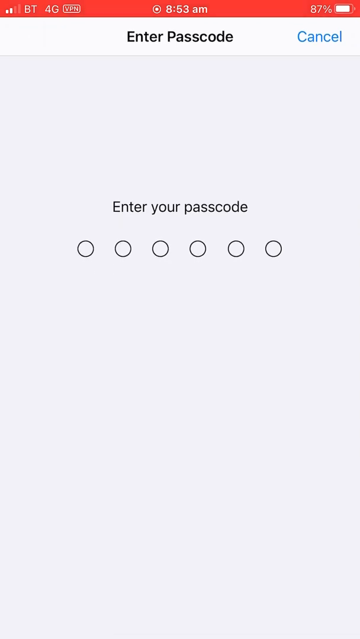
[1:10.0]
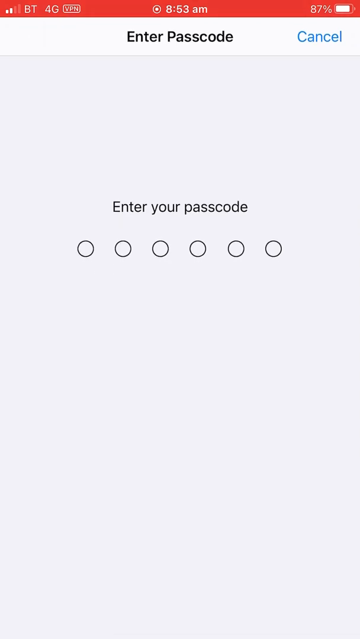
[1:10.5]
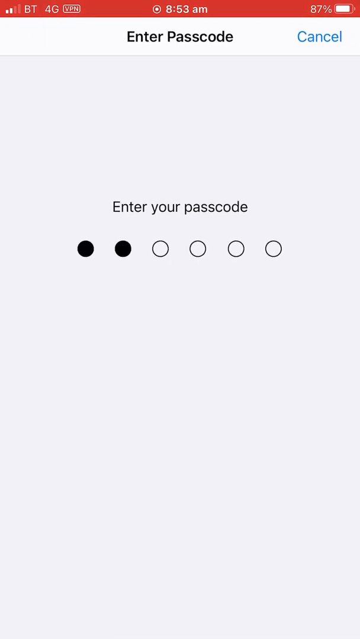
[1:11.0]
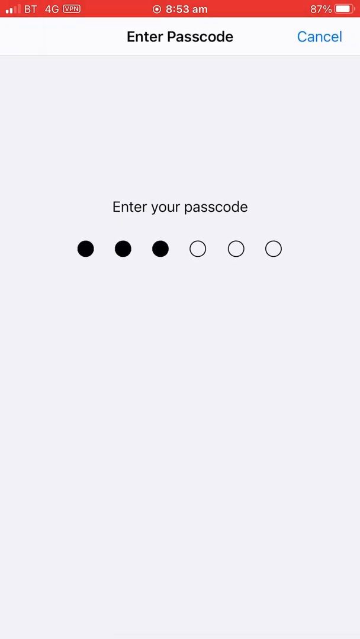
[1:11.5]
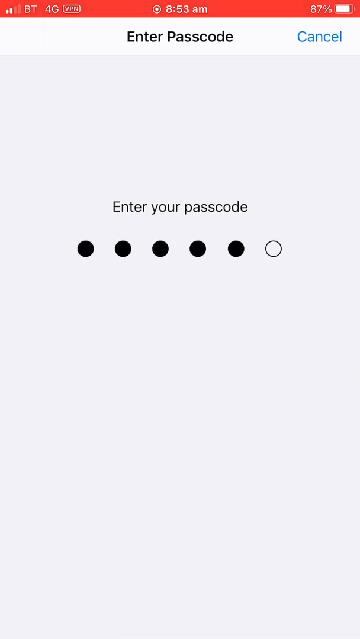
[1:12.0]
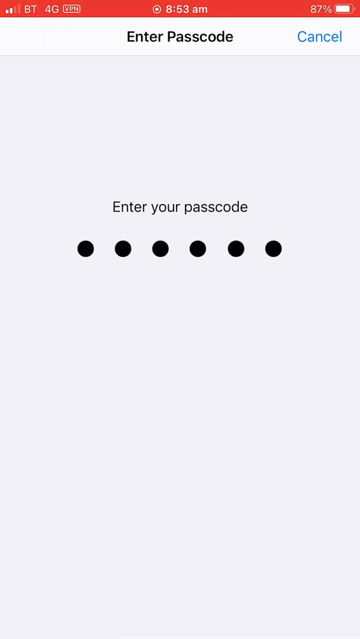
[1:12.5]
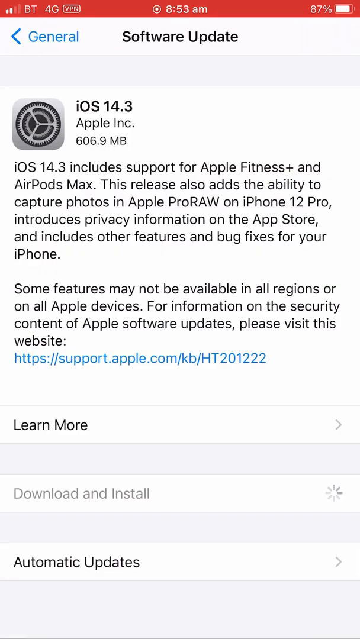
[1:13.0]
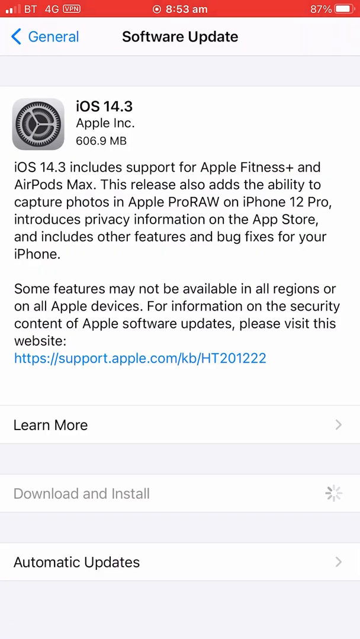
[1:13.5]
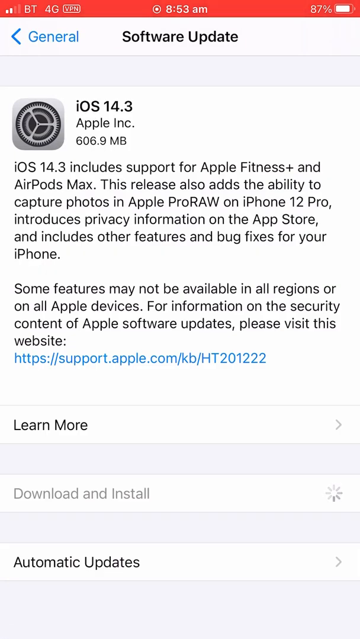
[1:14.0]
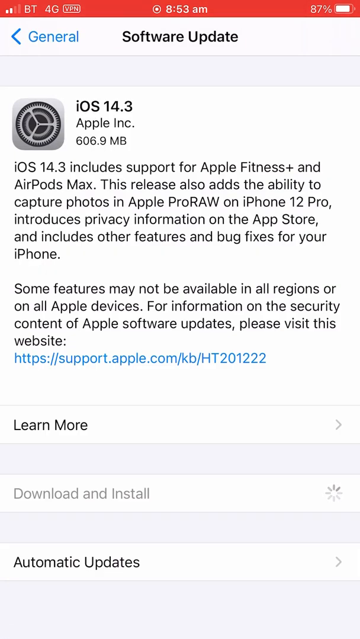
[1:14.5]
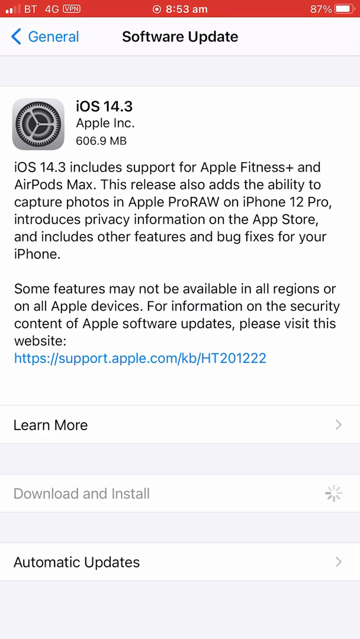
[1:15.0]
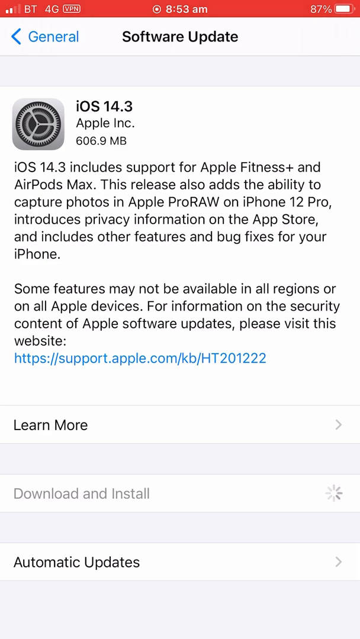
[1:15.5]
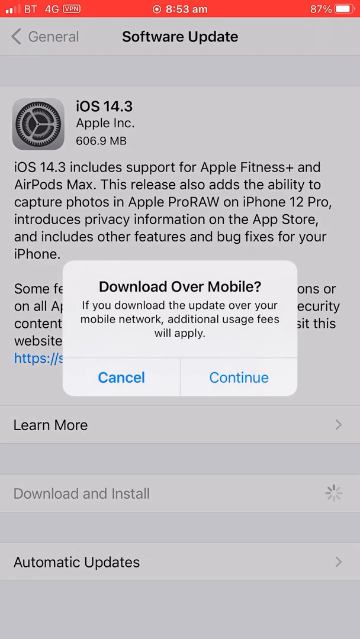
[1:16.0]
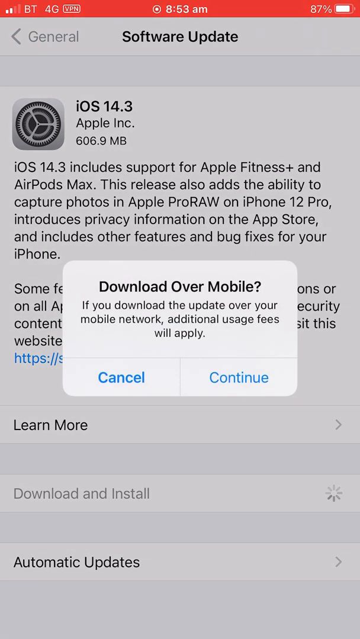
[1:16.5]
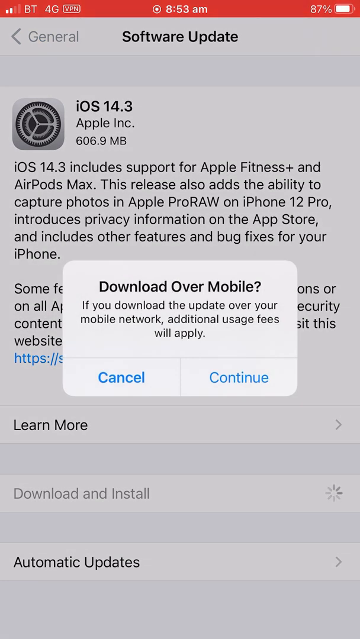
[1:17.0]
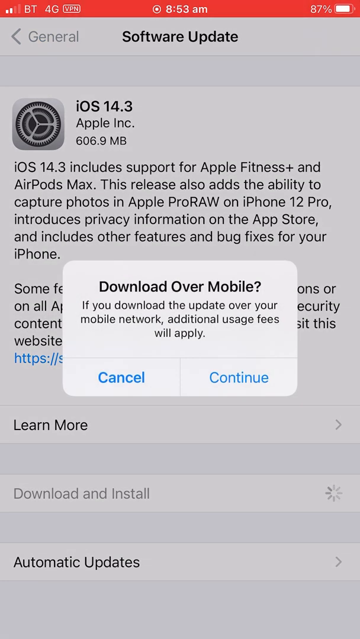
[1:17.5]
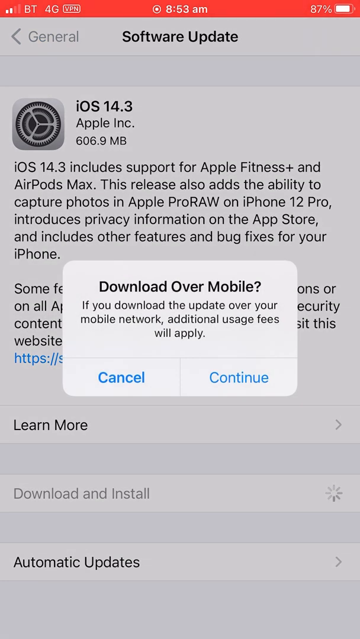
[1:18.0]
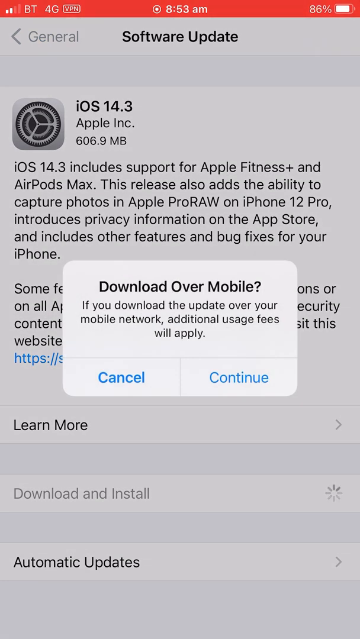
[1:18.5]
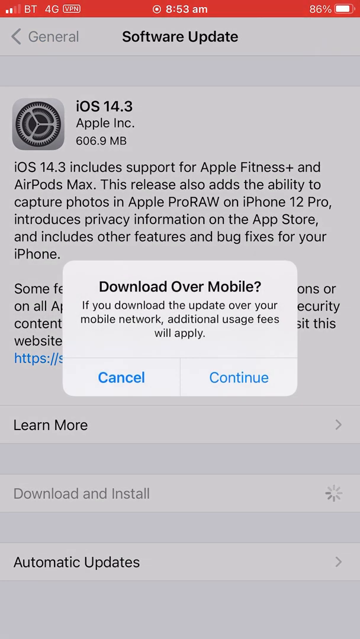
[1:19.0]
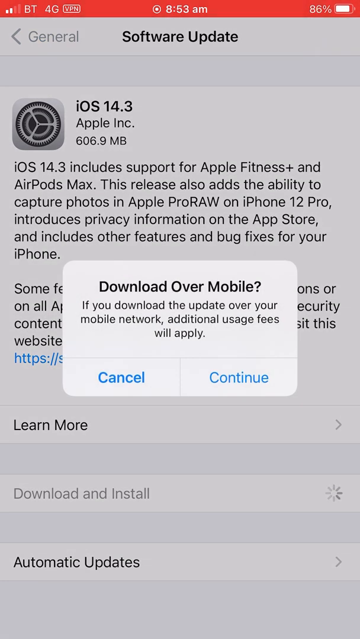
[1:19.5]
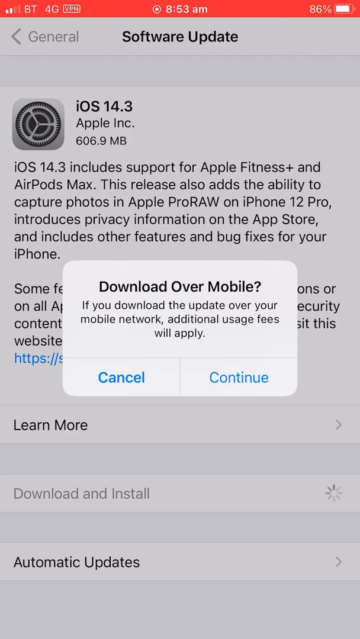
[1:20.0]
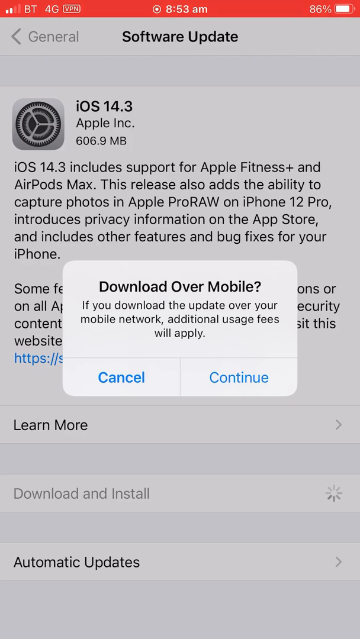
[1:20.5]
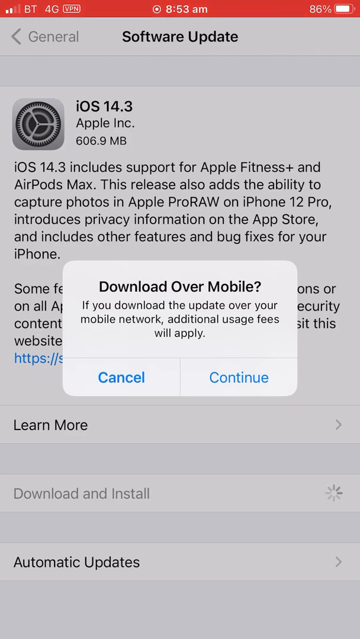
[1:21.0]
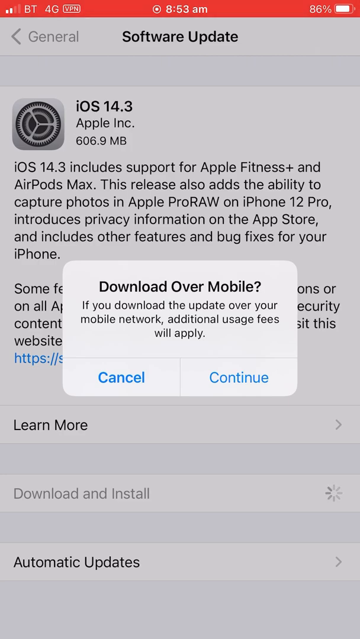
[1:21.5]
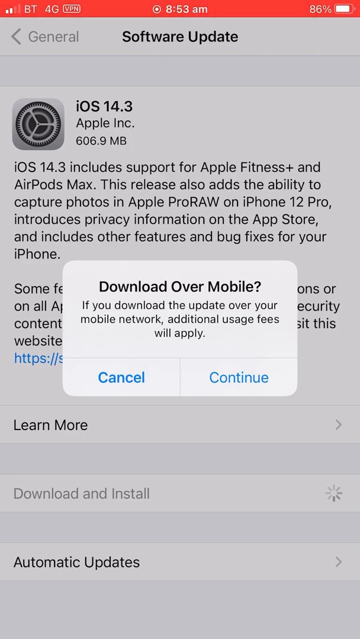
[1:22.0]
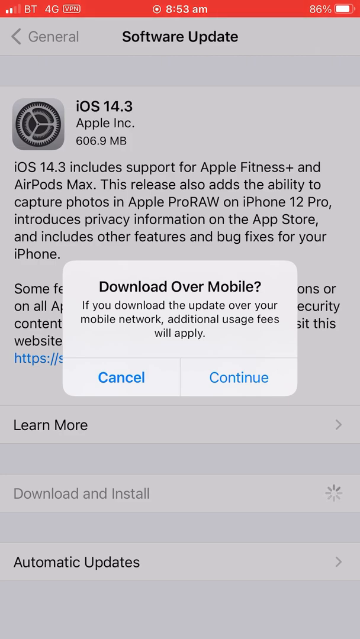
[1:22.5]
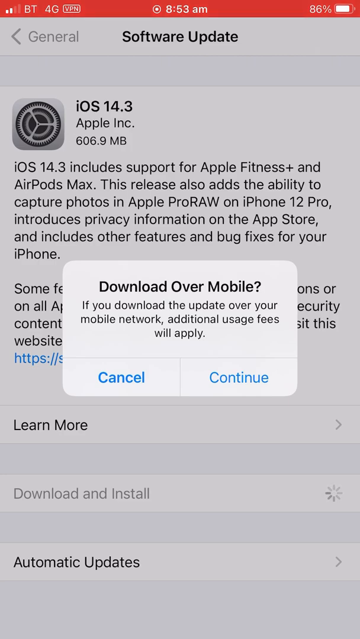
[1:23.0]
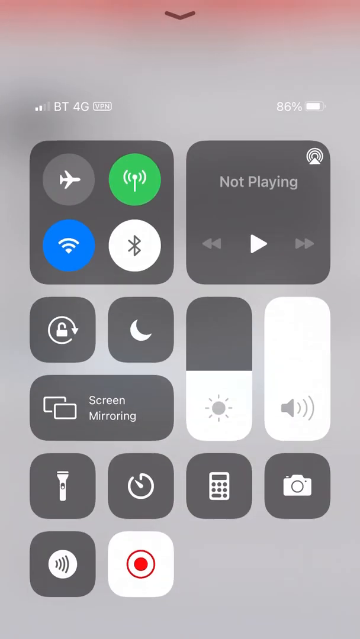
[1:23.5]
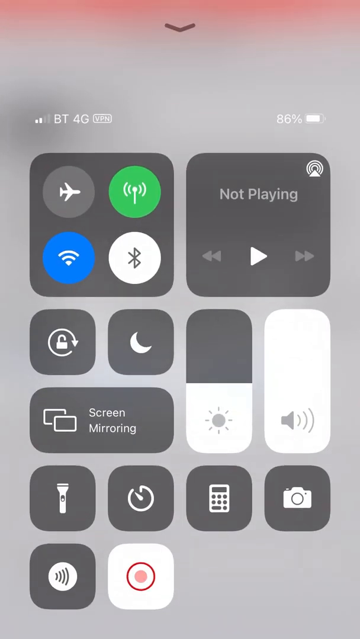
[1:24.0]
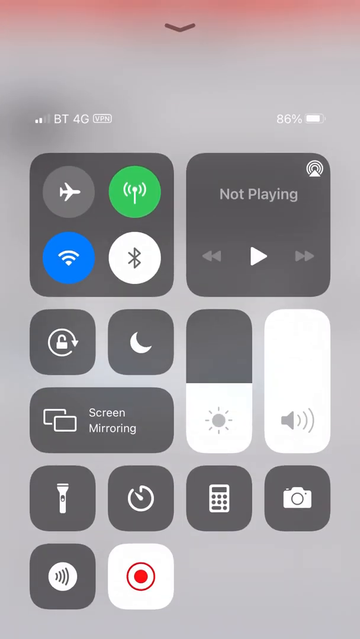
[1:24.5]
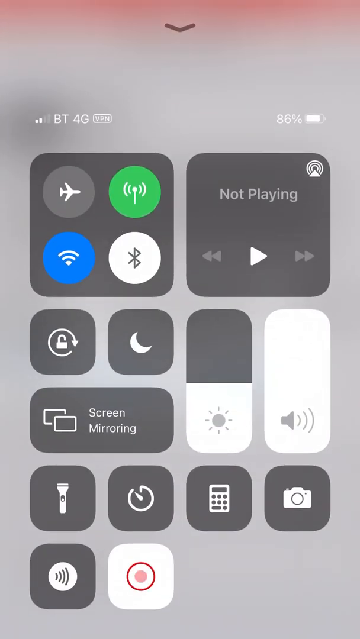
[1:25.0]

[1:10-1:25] At the end of the tutorial, the person enters his password after tapping to install the new software, and a notification appears: "Don't download over mobile. If you download the update over your mobile network, additional usage fees will apply." He seems about to continue and install the update as the tutorial ends.